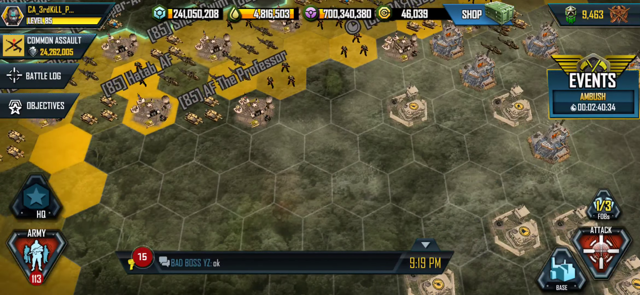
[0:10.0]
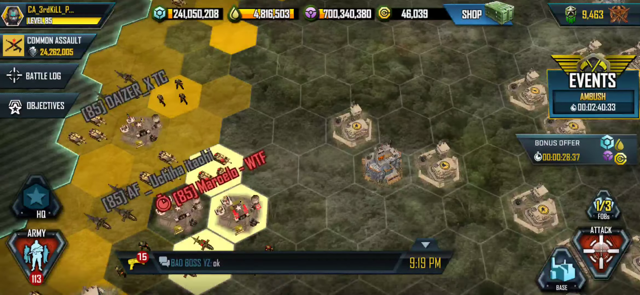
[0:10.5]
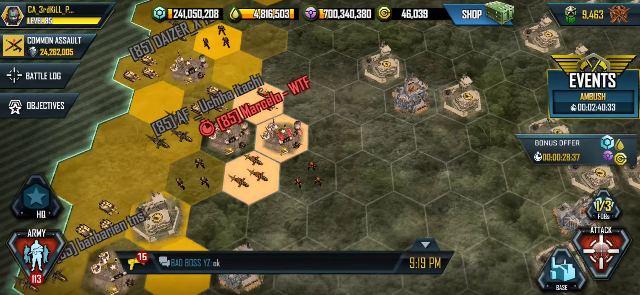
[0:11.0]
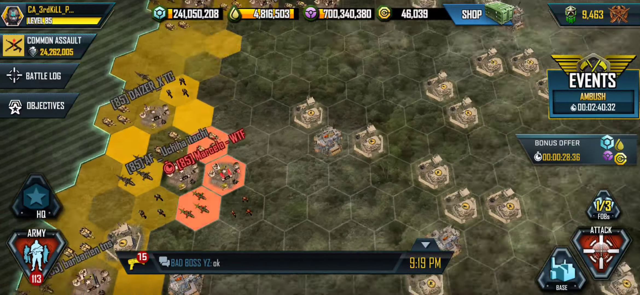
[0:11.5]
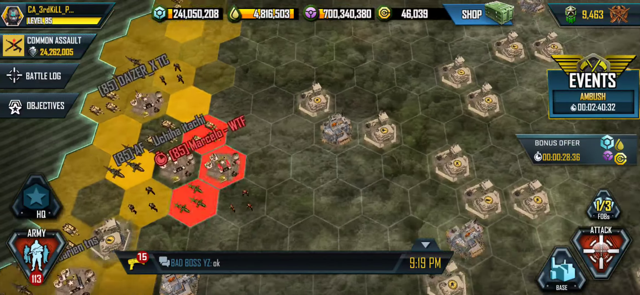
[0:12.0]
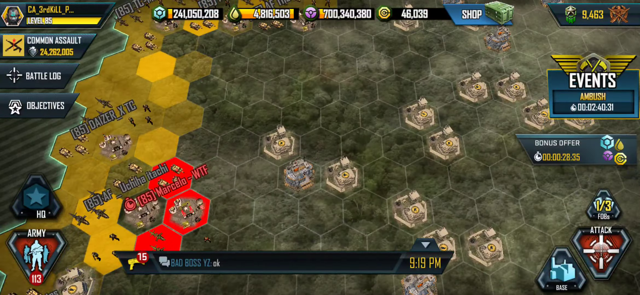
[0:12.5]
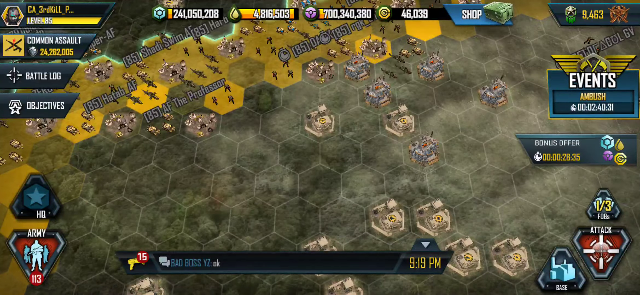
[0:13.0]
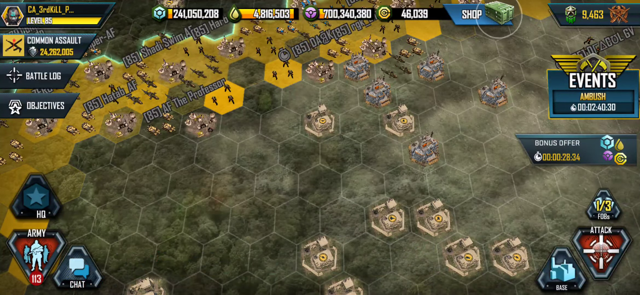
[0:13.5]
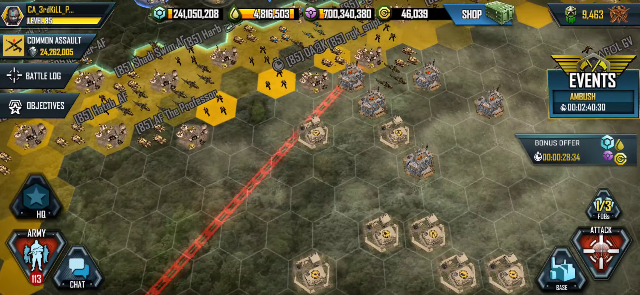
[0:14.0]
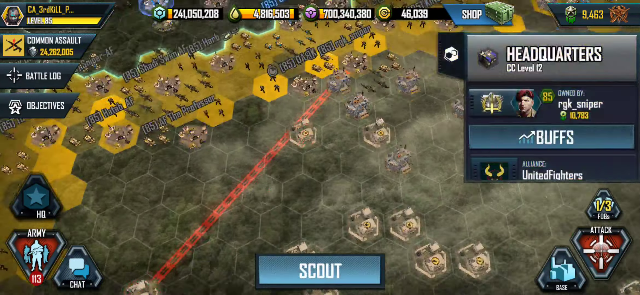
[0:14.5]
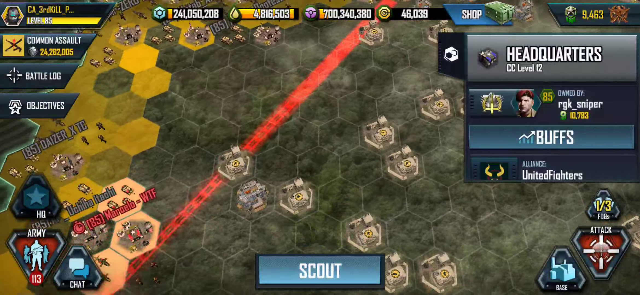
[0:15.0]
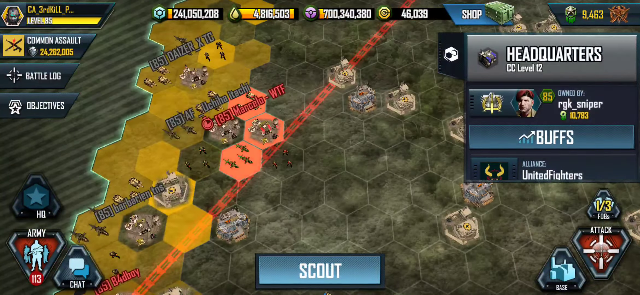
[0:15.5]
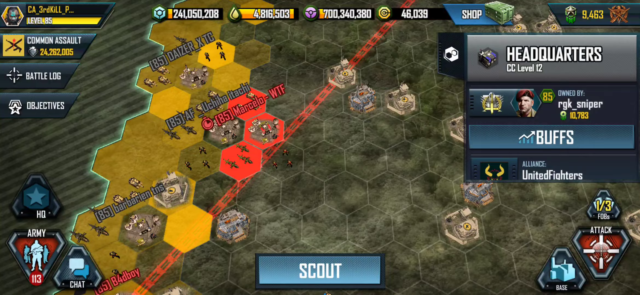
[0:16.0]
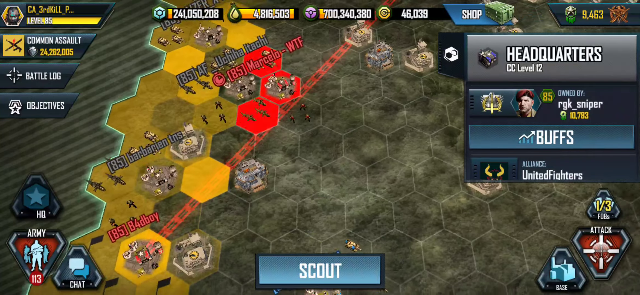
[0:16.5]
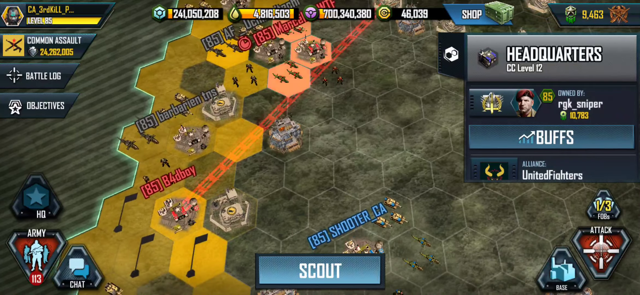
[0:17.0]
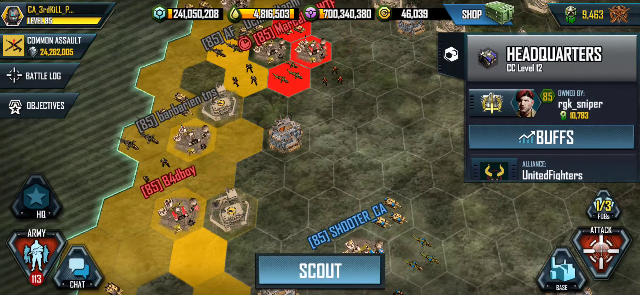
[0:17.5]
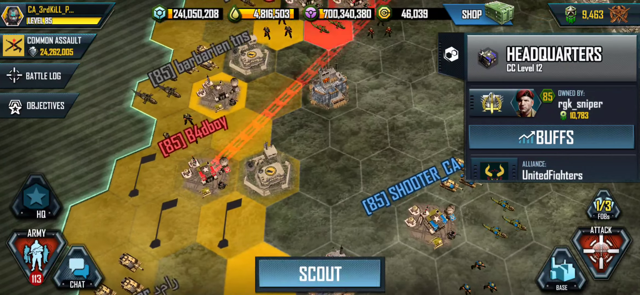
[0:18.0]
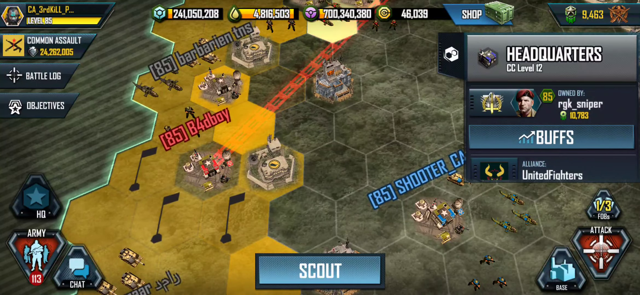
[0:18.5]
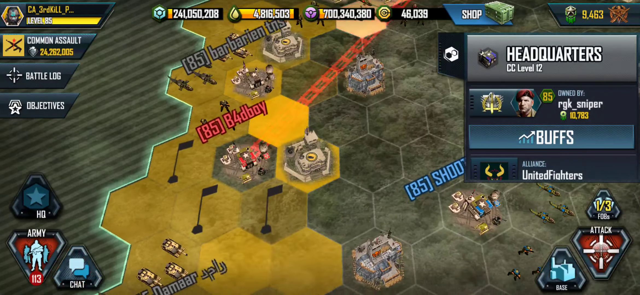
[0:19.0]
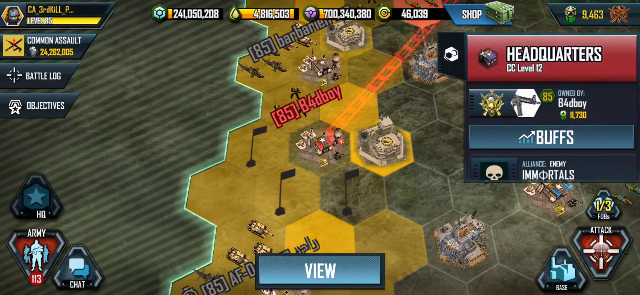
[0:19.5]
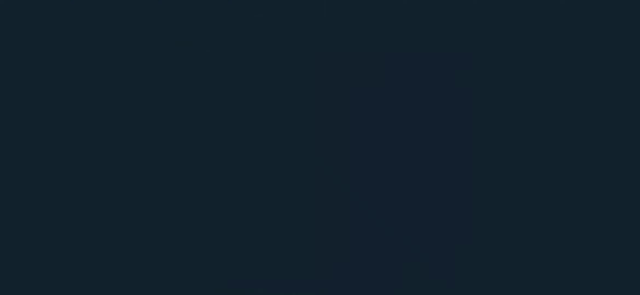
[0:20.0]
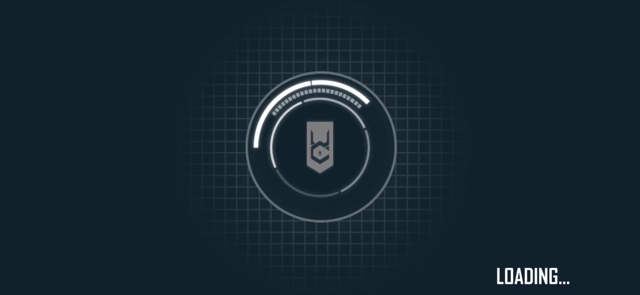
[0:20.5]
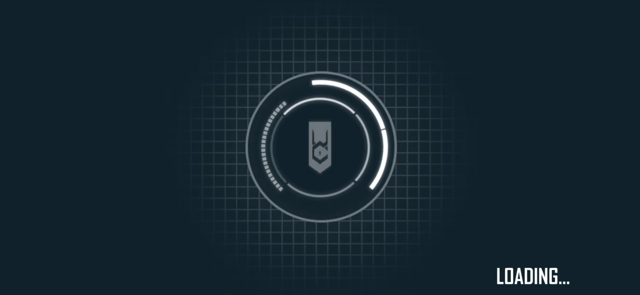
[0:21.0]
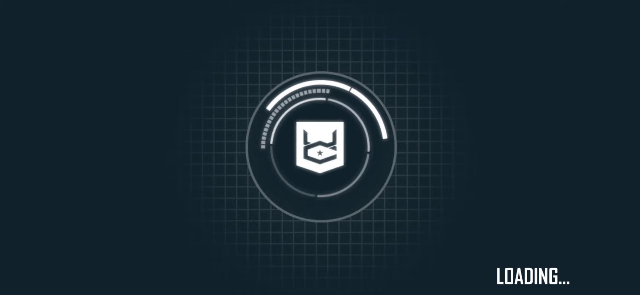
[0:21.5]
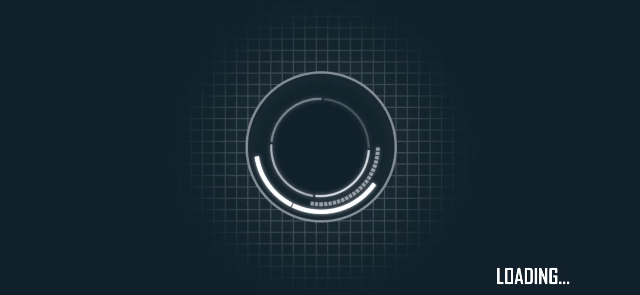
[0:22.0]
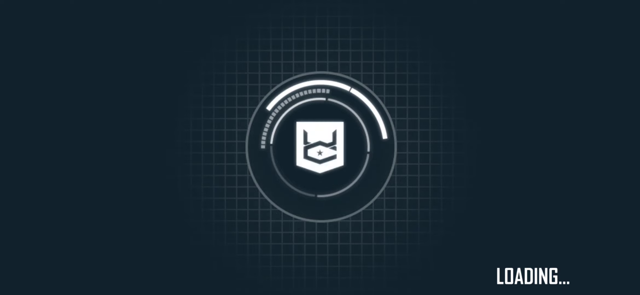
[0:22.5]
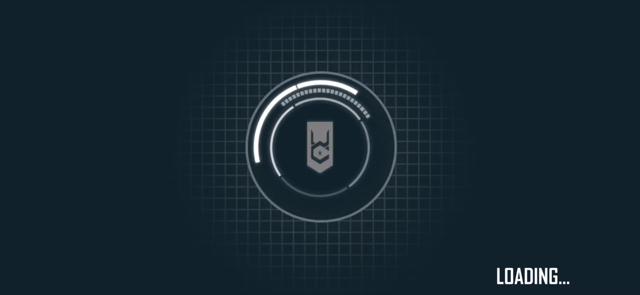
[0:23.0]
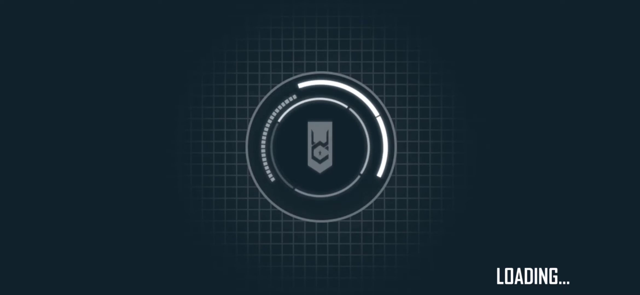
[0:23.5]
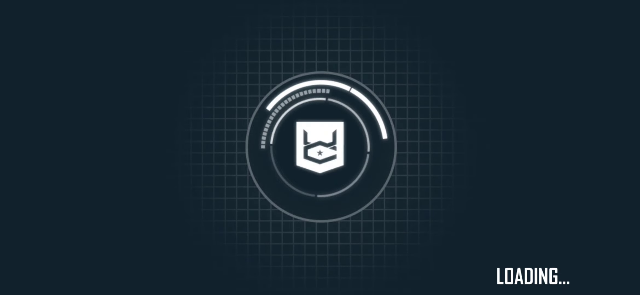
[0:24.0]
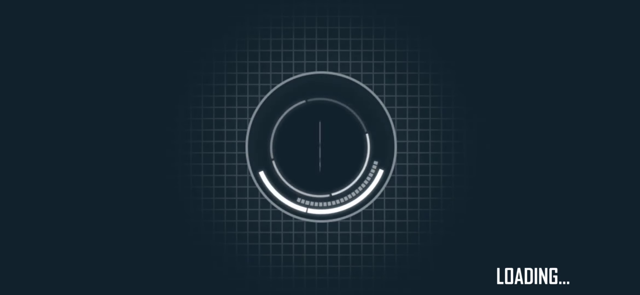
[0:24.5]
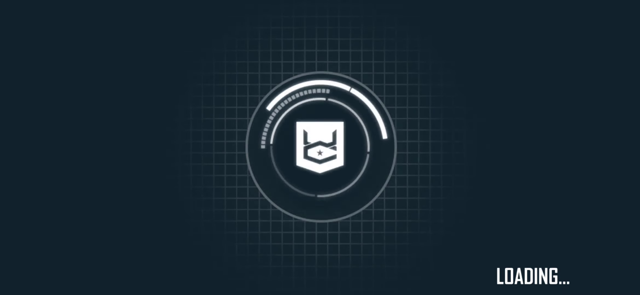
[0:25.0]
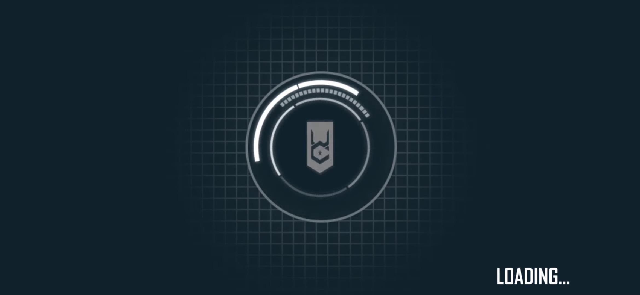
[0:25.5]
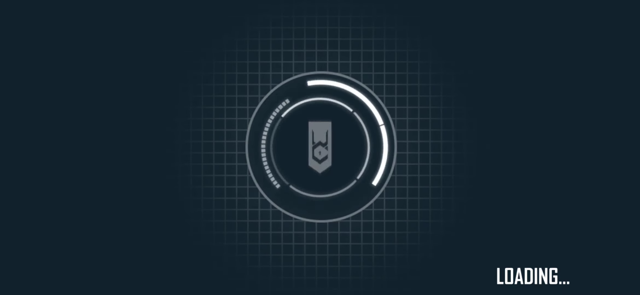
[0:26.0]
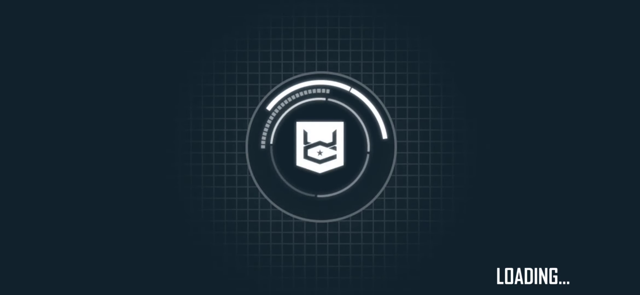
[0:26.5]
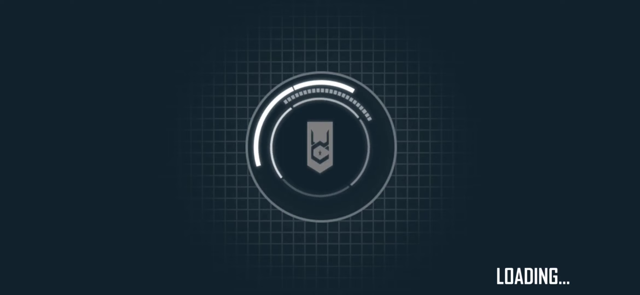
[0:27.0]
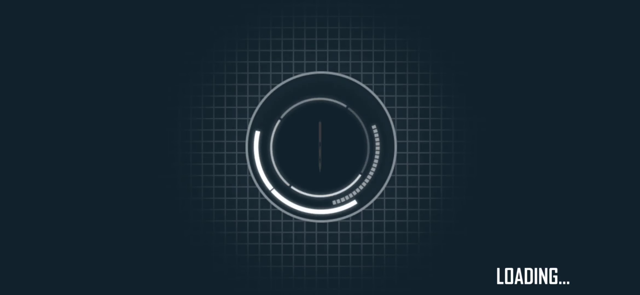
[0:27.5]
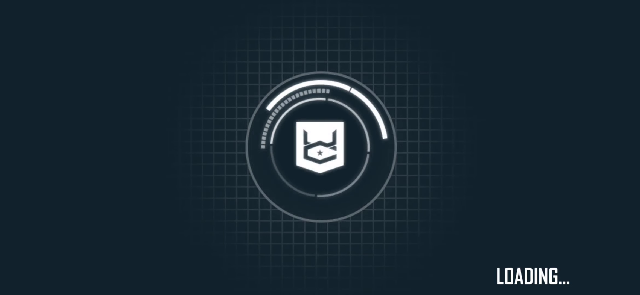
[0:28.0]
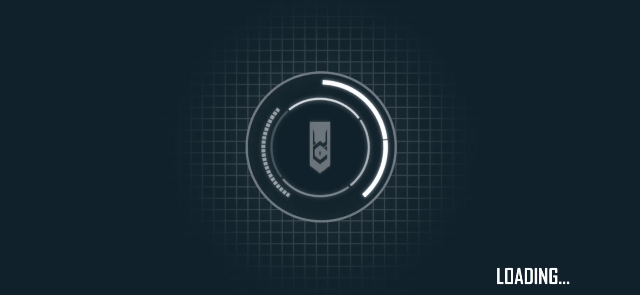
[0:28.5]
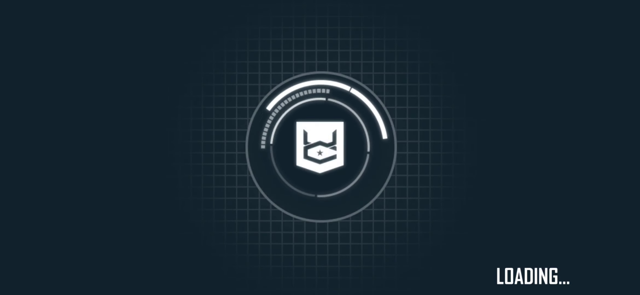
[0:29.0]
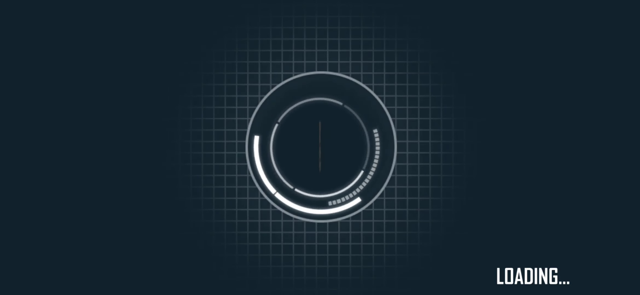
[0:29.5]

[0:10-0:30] The strategy game is shown in a very wide mode, apparently as some sort of screen capture. The game is a map of hexagons, and it looks like many players play at once. The view is that of a player called CA-3rdkill-P, who is level 85. The screen is full of different numbers and scores. There is a shop he can attack, plus his base and army, among many other elements. A lot of the field is yellow, and the yellow parts apparently all belong to the same team, which is level 85; most of the names contain "AF". An area flashing red belongs to a different player, Marcello-WTF. There is a timer. Another player's name, 85-B4-D-BOY, is also in red. A red line runs between the sites. Some action is taken and a loading screen appears, which takes a while.